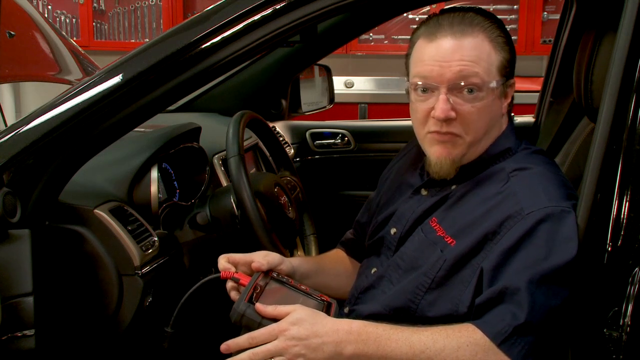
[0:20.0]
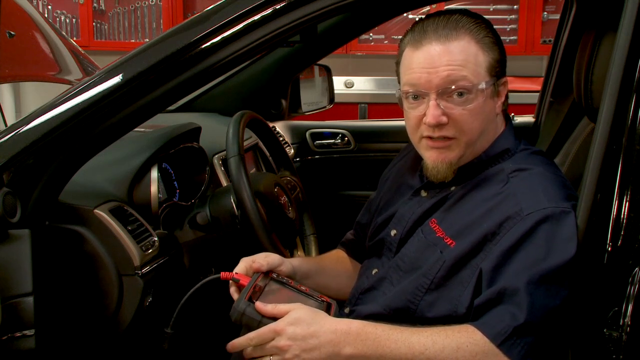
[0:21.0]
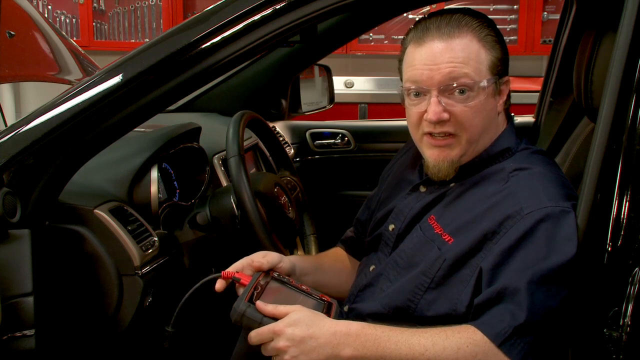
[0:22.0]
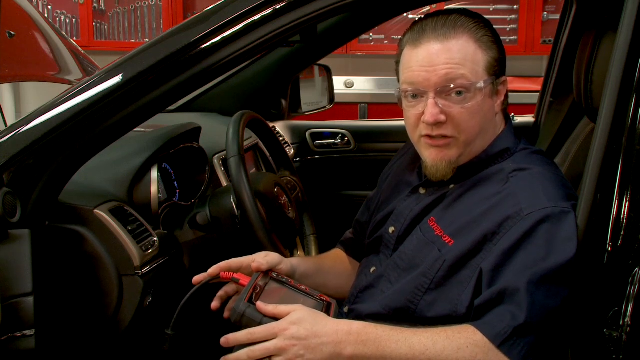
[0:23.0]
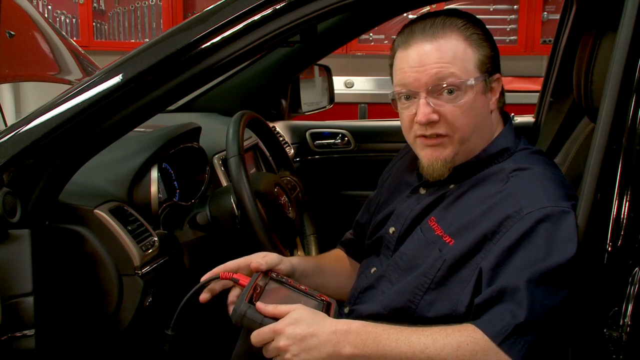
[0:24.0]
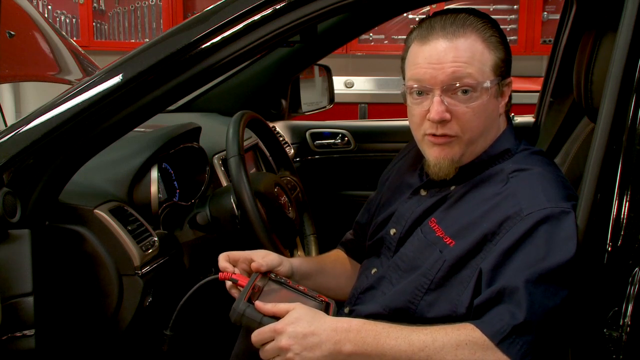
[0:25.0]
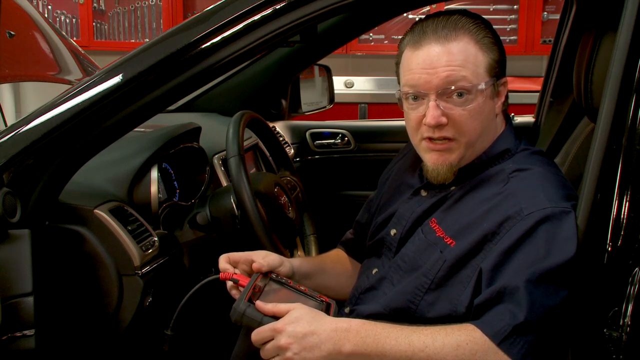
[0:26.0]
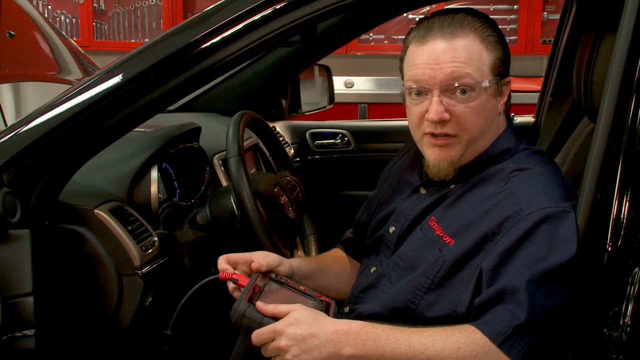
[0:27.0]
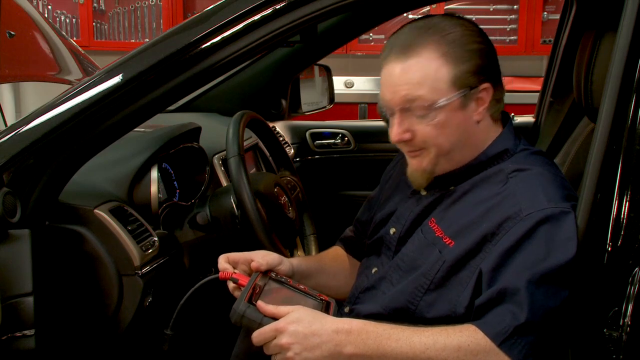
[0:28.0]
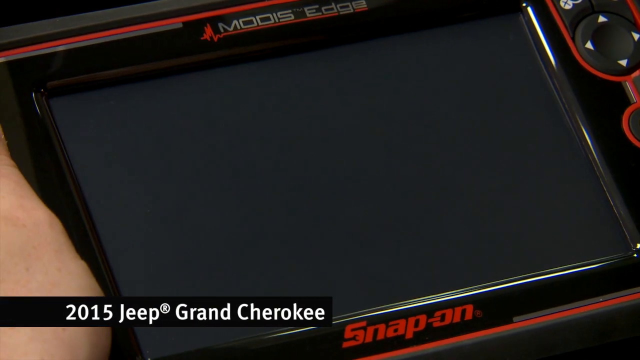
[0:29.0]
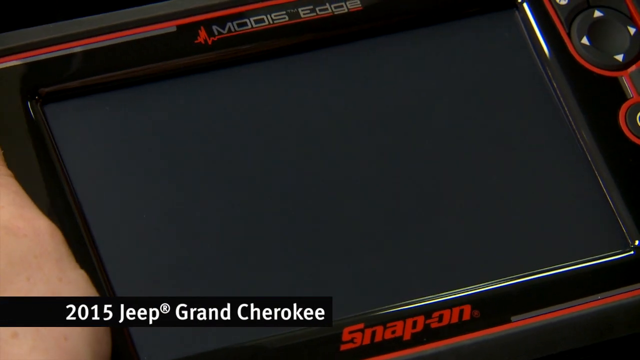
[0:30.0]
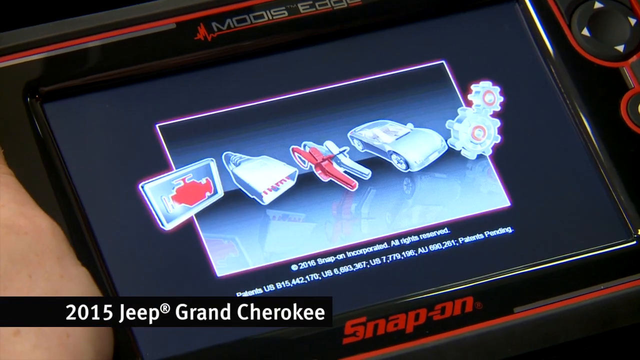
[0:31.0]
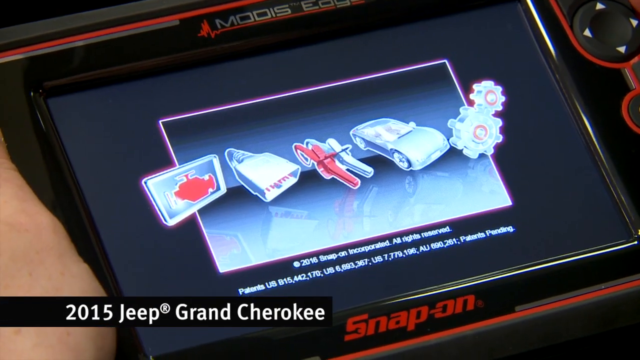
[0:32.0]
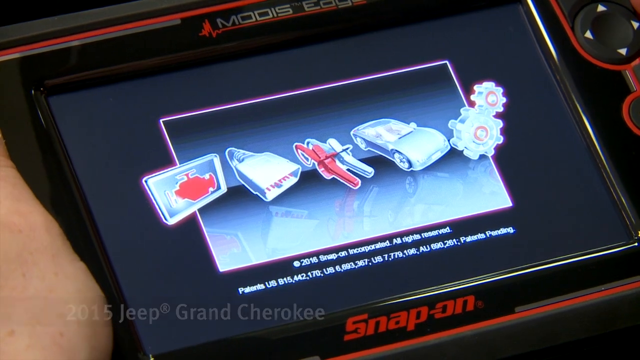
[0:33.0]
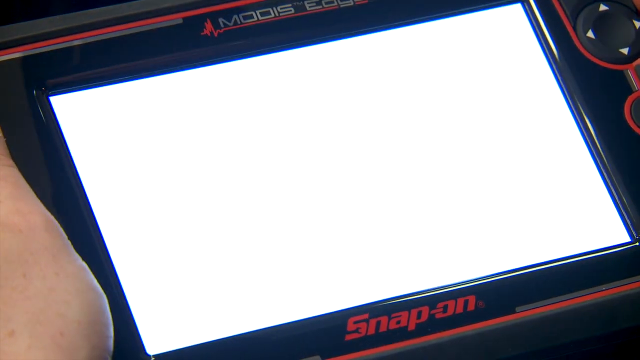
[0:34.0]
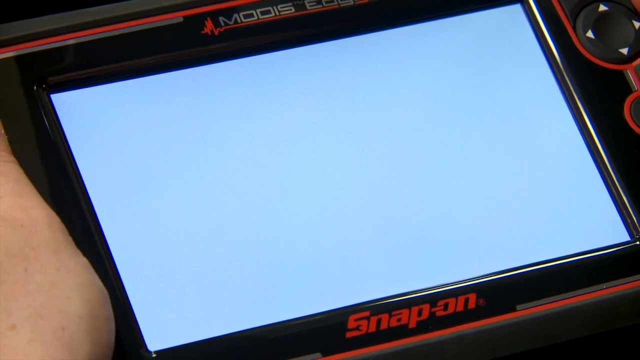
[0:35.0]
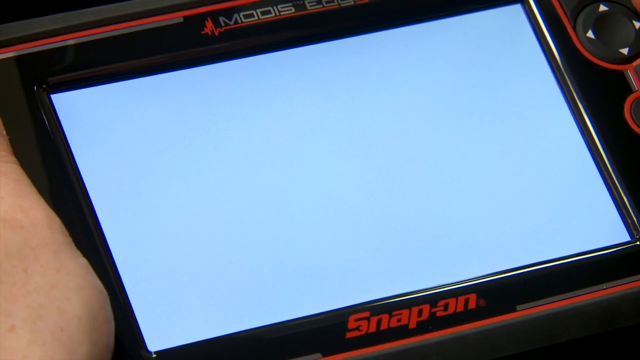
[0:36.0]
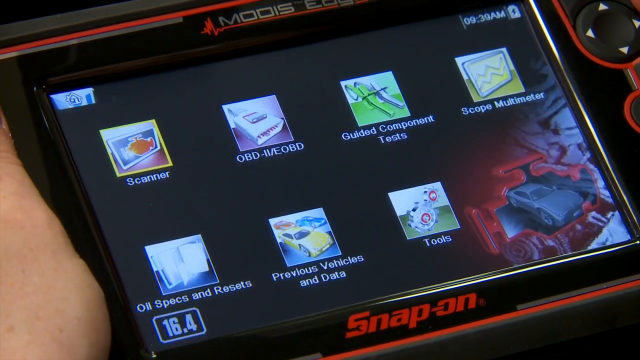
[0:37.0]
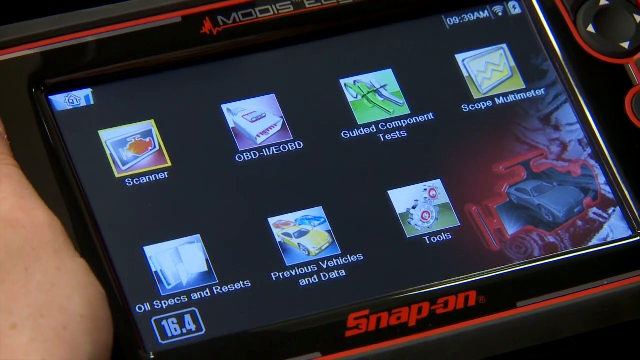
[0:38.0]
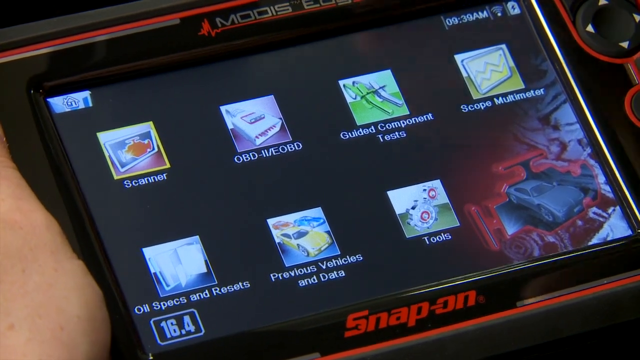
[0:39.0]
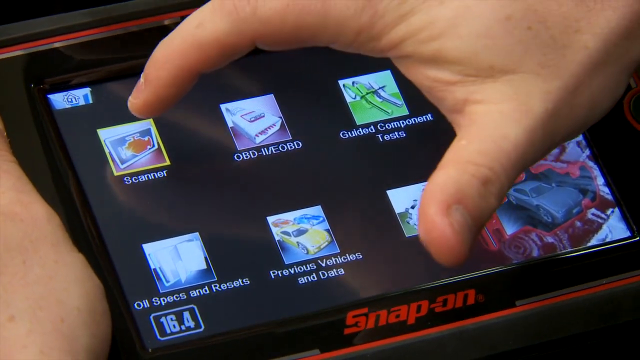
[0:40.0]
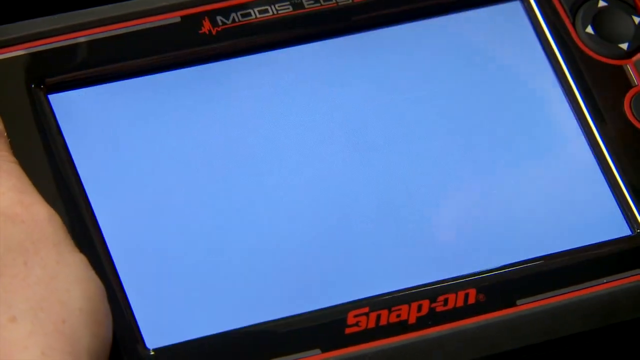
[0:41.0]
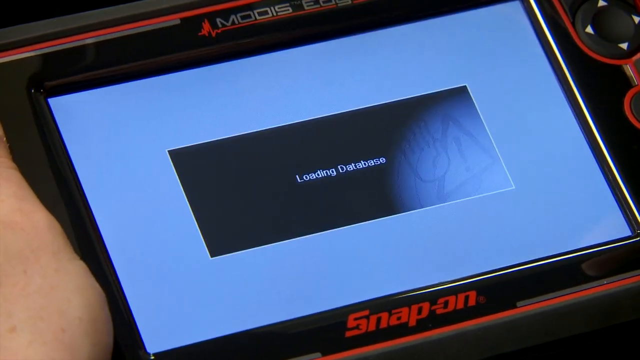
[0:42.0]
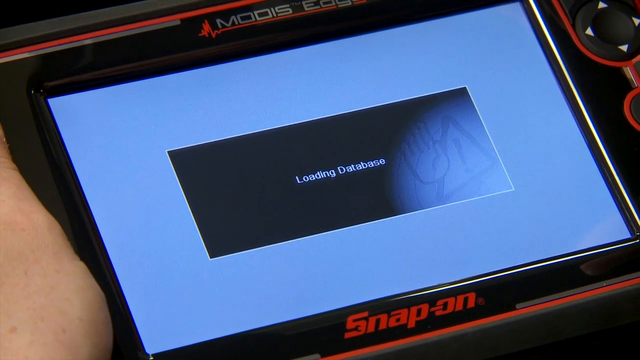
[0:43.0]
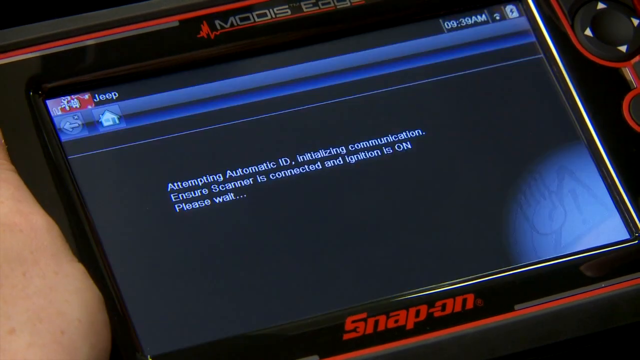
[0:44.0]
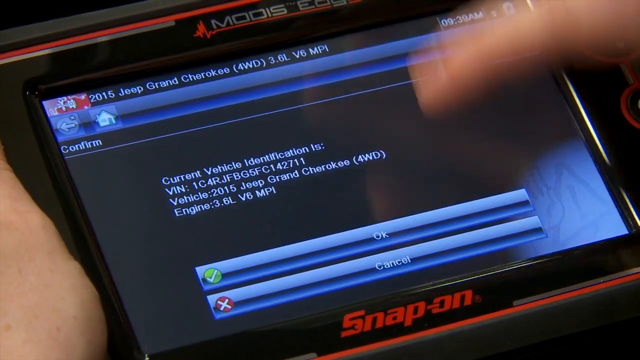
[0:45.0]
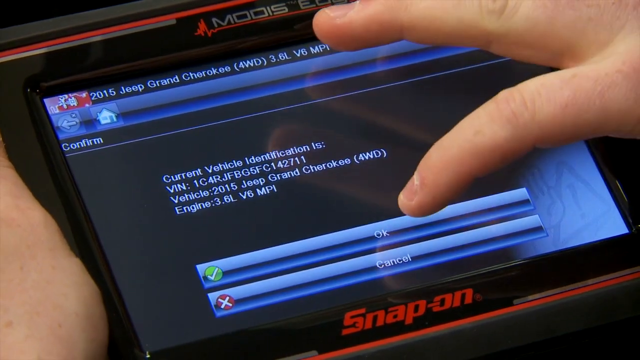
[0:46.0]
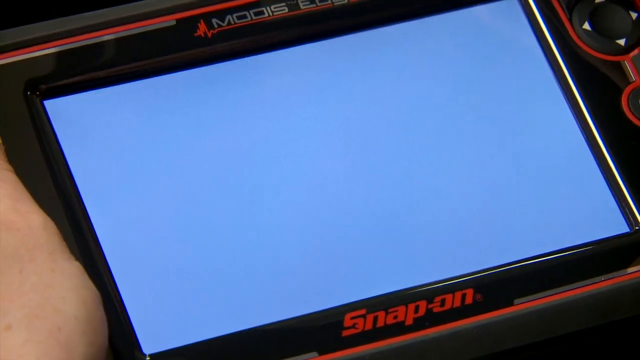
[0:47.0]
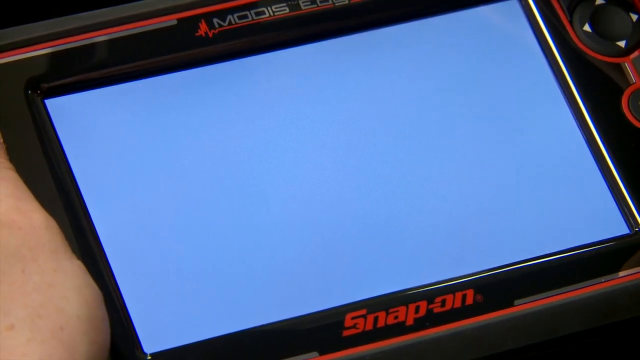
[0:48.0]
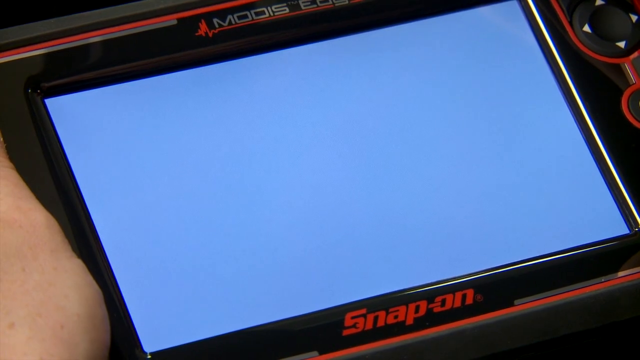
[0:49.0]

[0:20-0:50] The man turns on a small device with a screen, apparently a tablet. An image of a car and a few other icons appear on the screen, along with the text "snap on", possibly the brand of the device. He opens a menu with several options, including "scanner", "guided component tests" and "scope multimeter tools oil specs and resets and previous vehicles and data." He taps "scanner", and the device shows that it is loading a database. He taps okay on the next screen and waits, and the shot ends with the screen still loading.